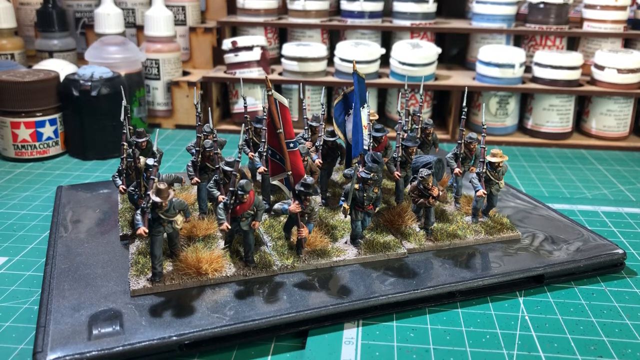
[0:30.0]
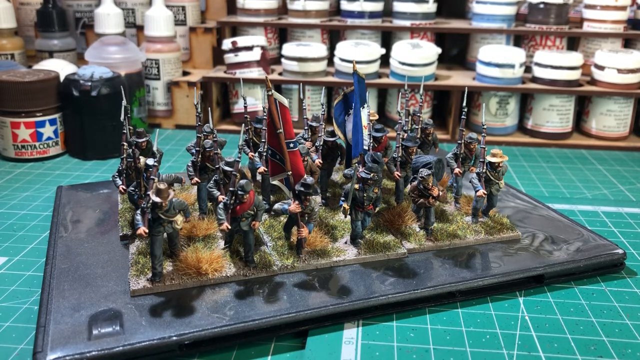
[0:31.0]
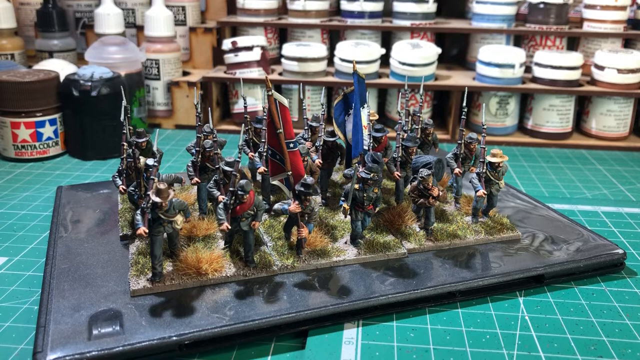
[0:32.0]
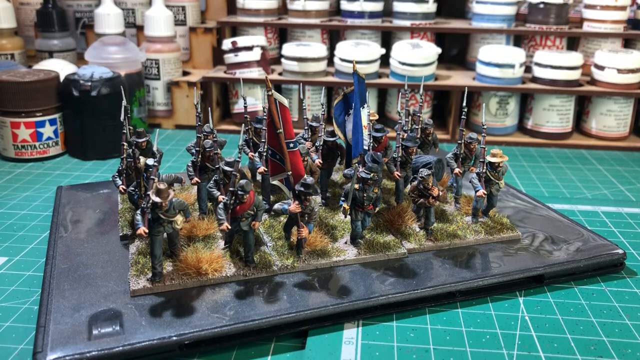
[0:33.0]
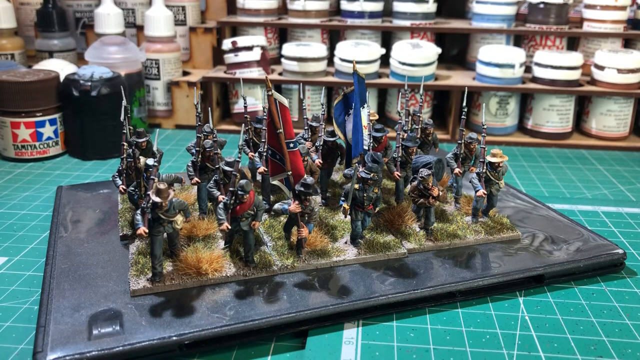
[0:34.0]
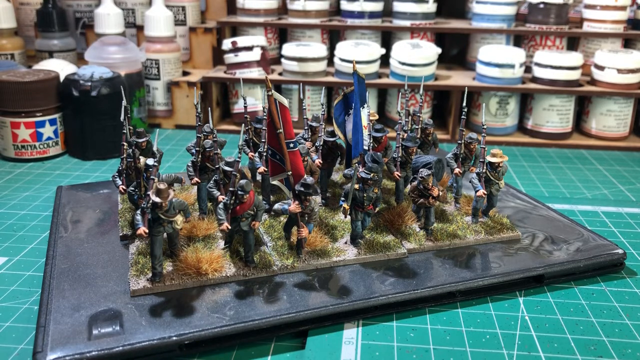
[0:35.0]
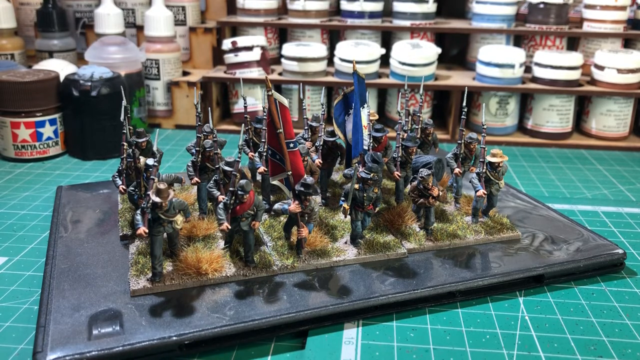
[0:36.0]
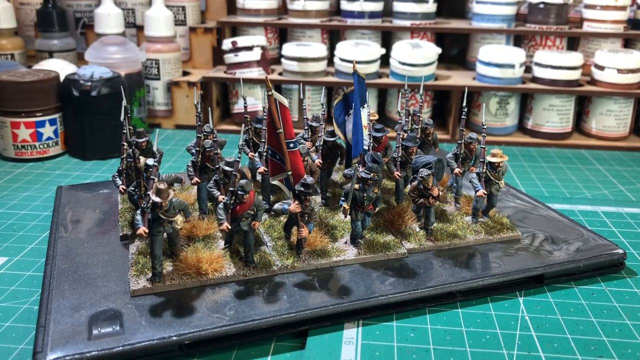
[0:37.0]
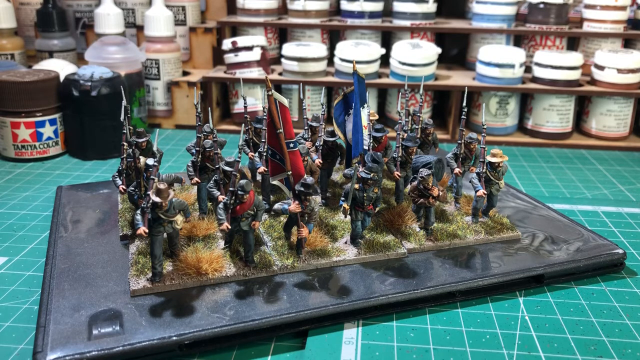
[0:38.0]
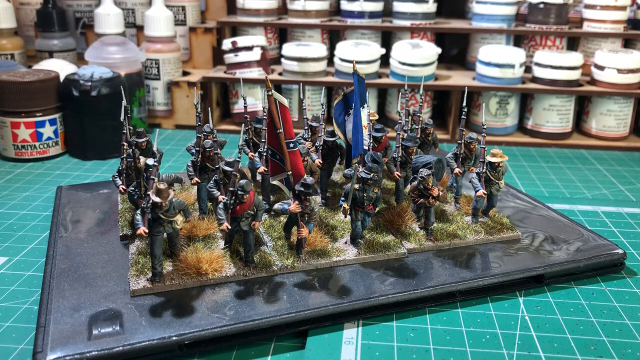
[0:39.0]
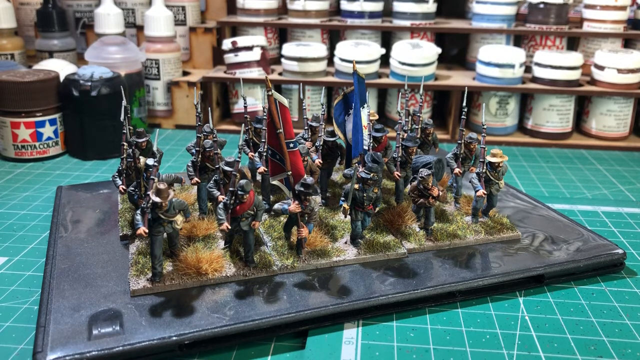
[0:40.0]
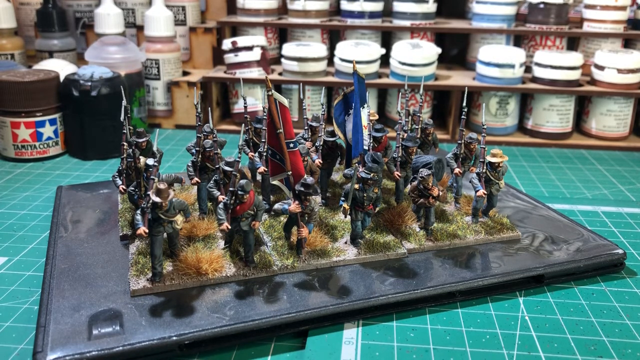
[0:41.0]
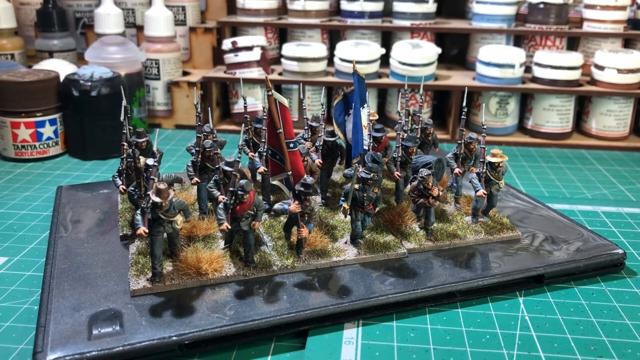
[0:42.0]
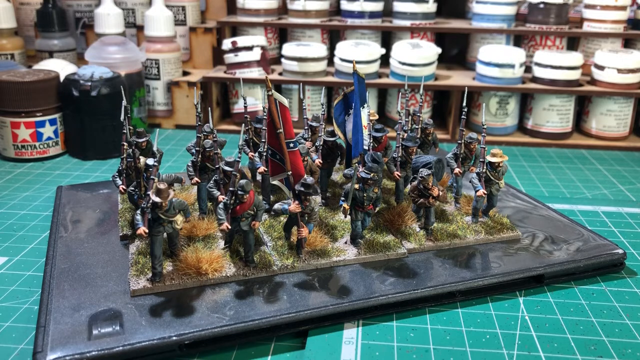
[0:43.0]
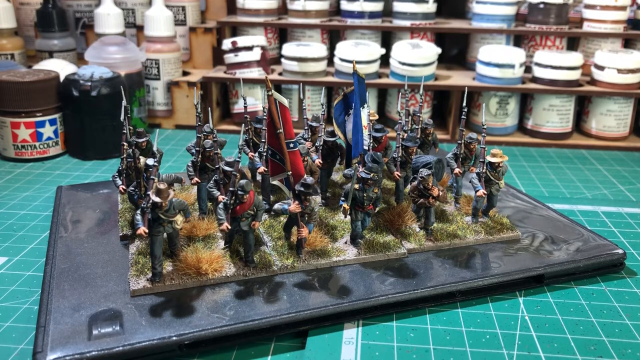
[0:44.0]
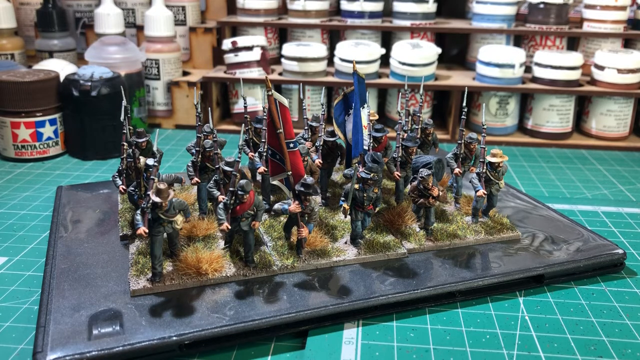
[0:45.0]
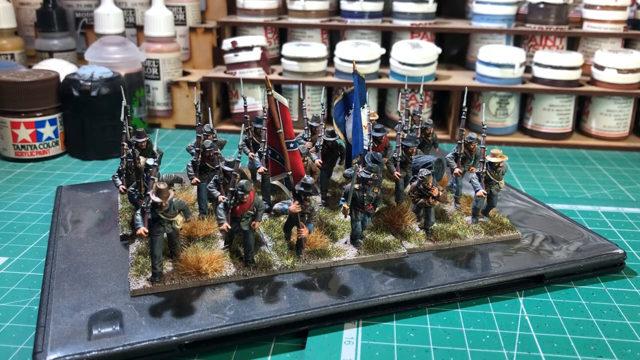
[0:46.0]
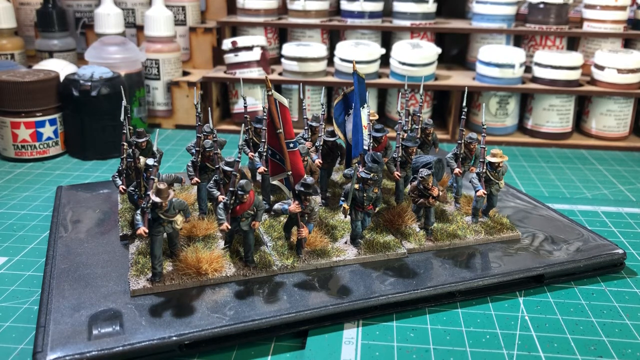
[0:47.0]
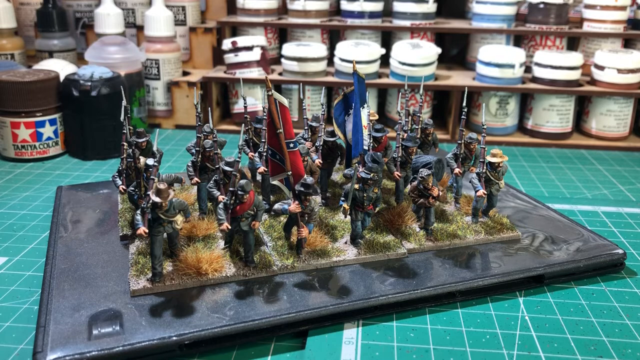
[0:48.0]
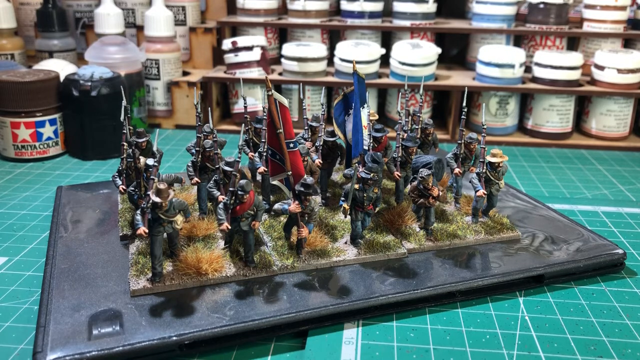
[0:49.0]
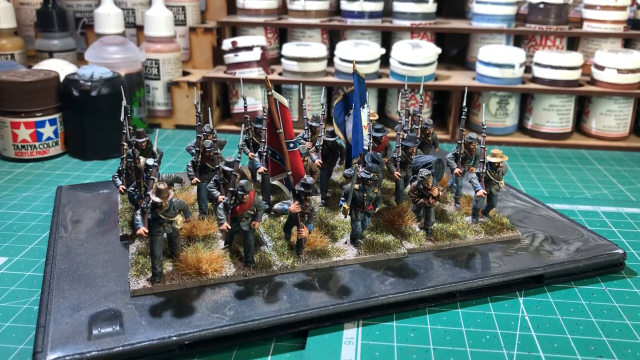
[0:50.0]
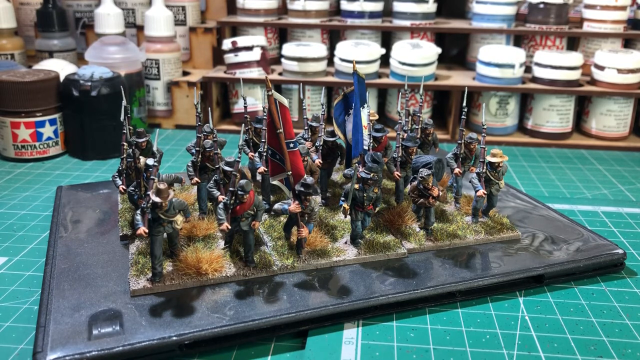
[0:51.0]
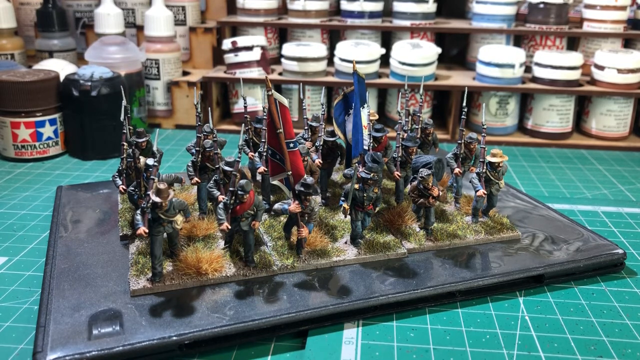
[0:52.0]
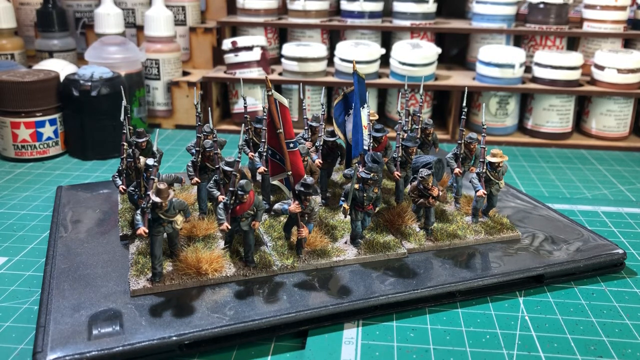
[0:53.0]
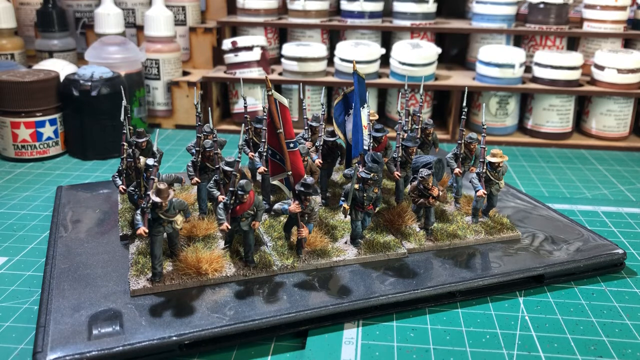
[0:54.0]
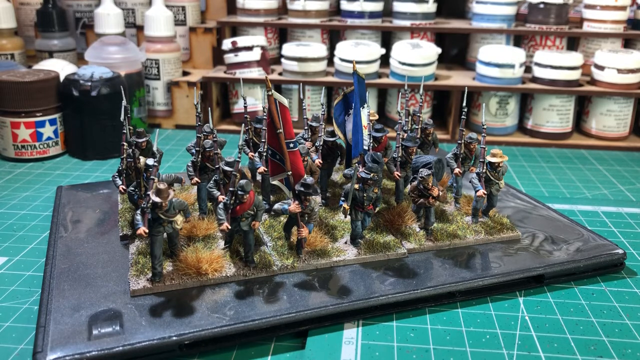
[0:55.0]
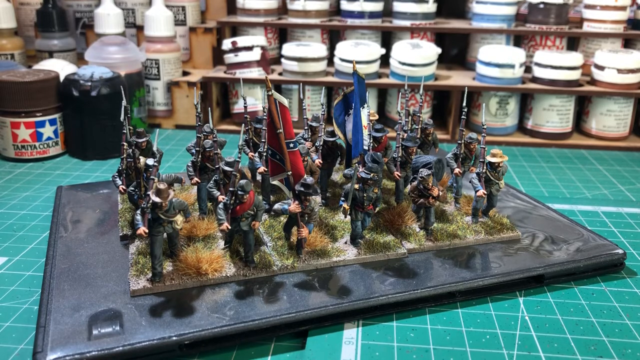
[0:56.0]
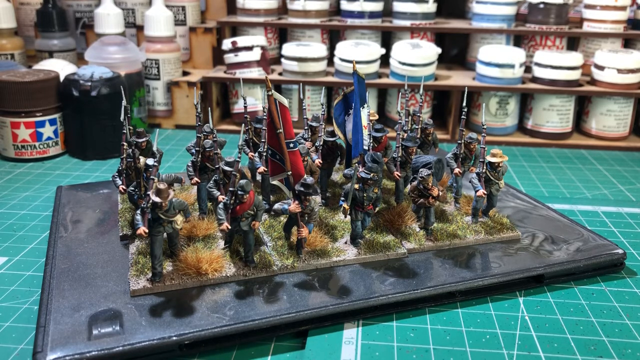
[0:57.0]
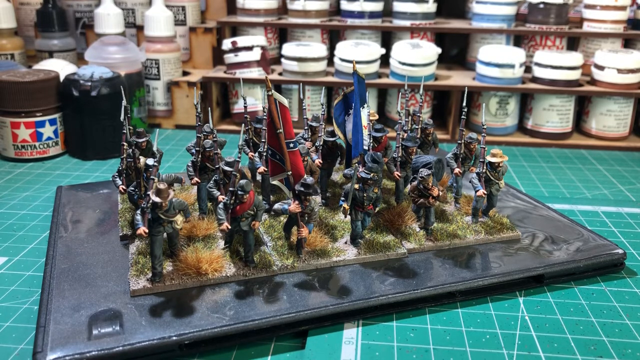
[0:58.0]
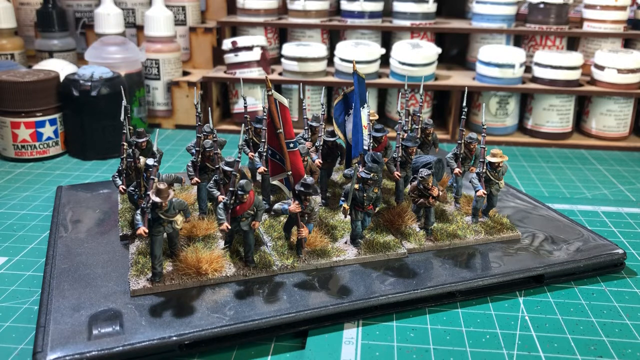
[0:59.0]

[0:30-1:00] The static image shows figurines on a table inside a workshop. The figurines look war-based and are potentially Confederacy figurines. Behind them are paint canisters, paint pots and paints of different colours. There are approximately 15 to 20 figurines; some carry flags and most carry weapons. The figurines look solid, and the workshop appears large. There are no humans in the image, and nobody seems to be working on the figures.